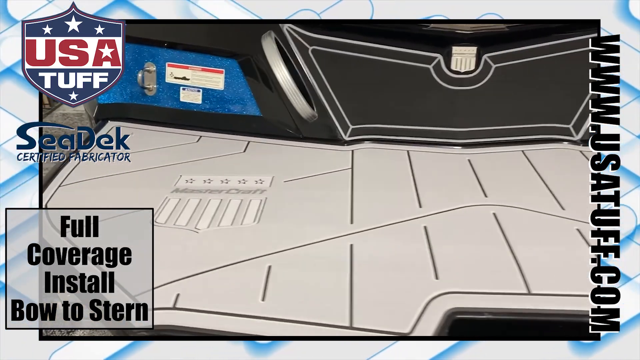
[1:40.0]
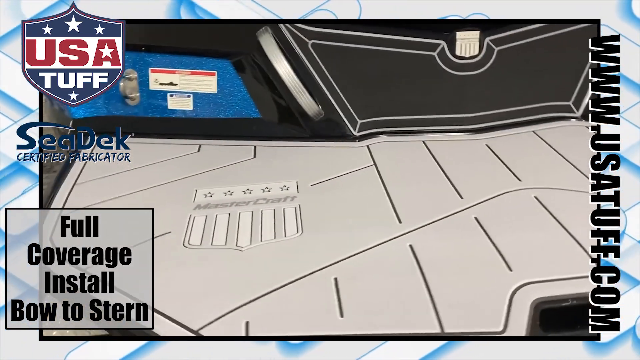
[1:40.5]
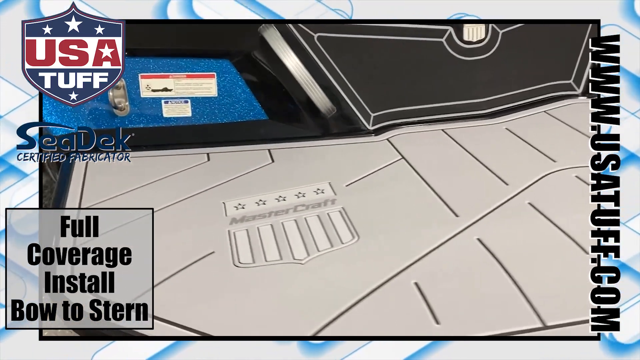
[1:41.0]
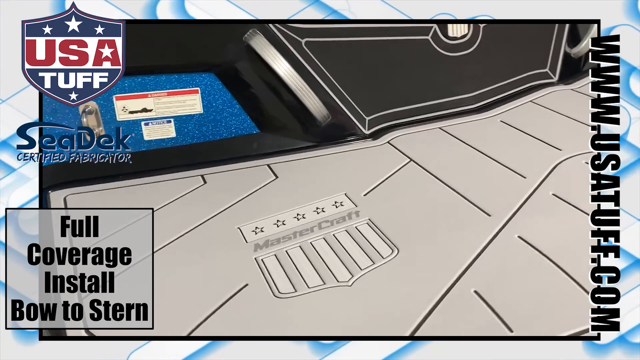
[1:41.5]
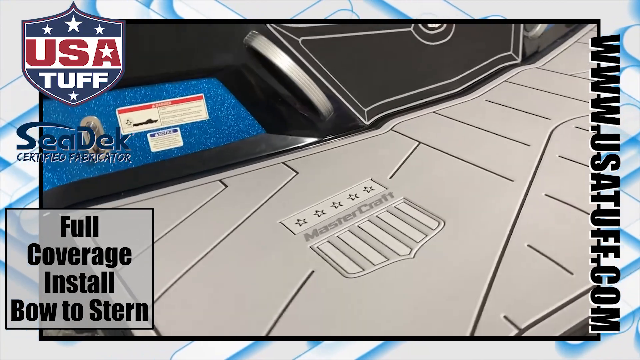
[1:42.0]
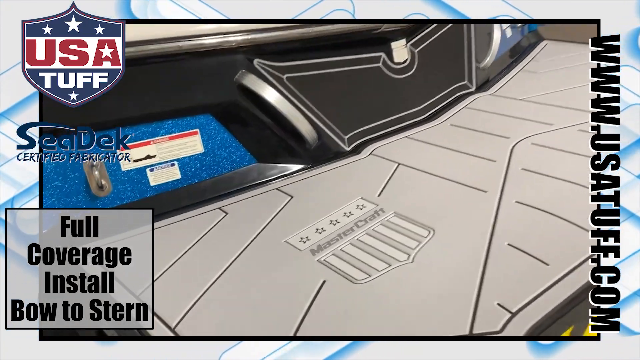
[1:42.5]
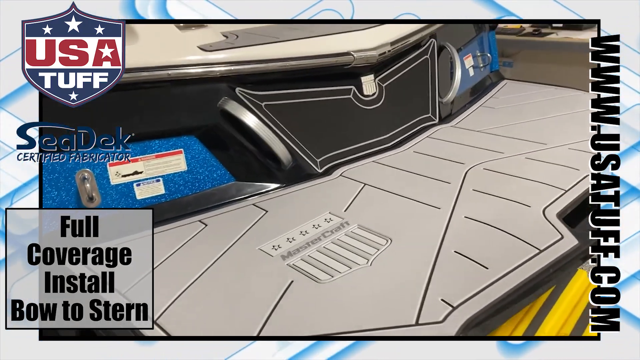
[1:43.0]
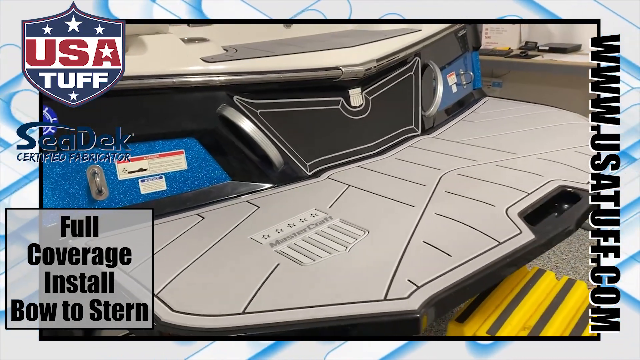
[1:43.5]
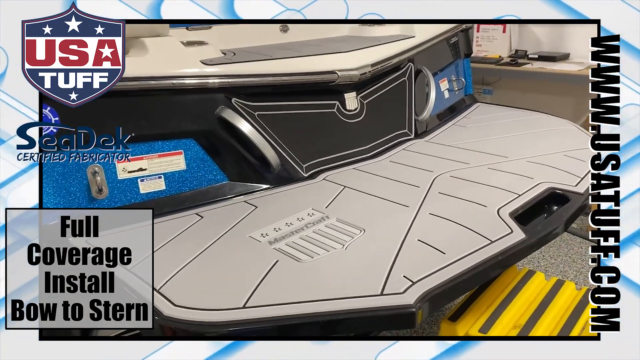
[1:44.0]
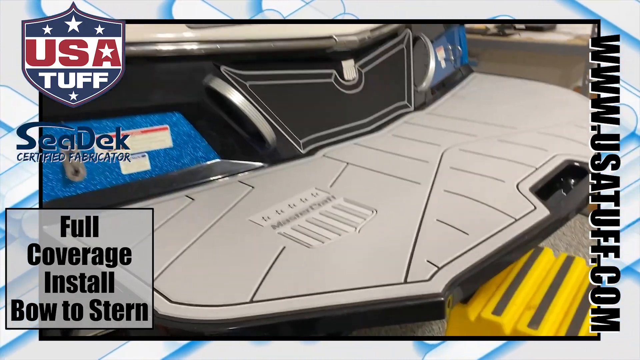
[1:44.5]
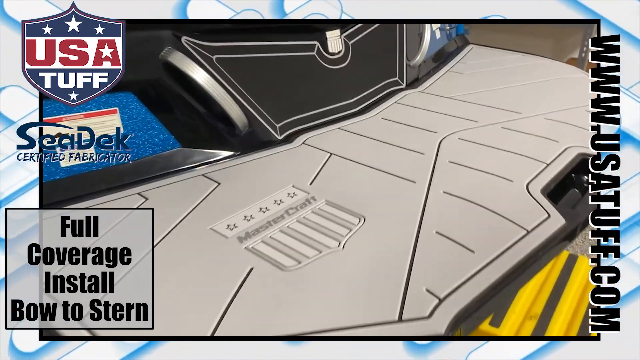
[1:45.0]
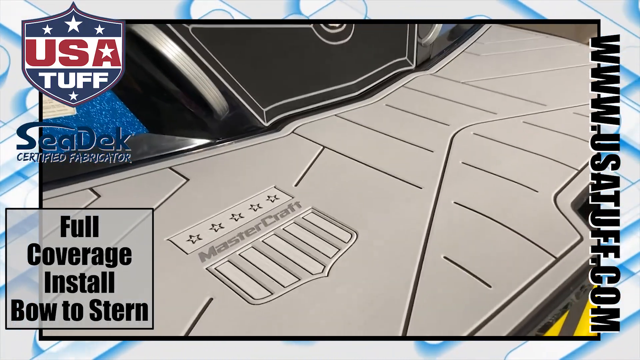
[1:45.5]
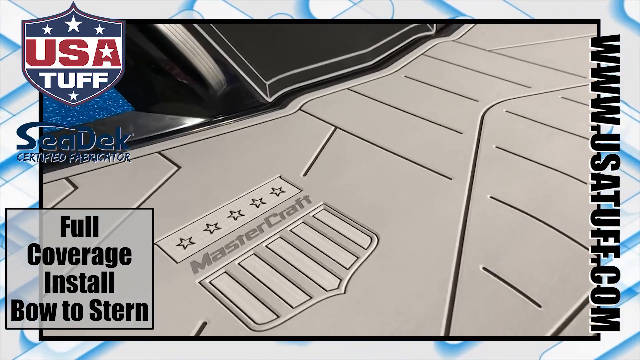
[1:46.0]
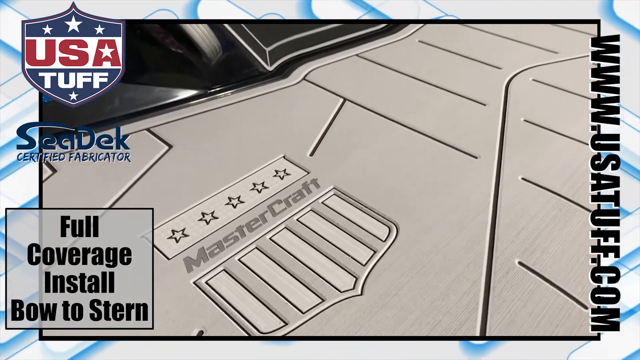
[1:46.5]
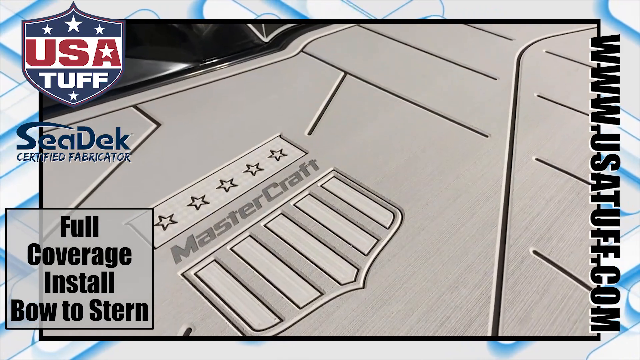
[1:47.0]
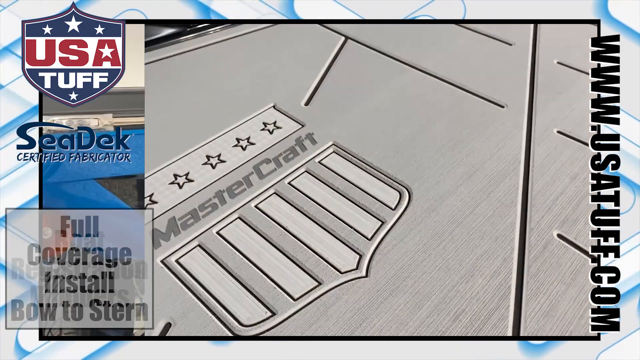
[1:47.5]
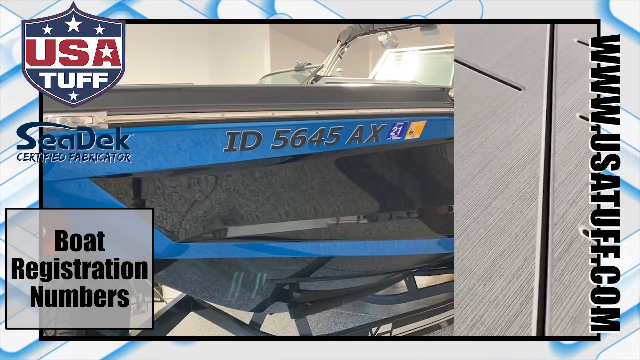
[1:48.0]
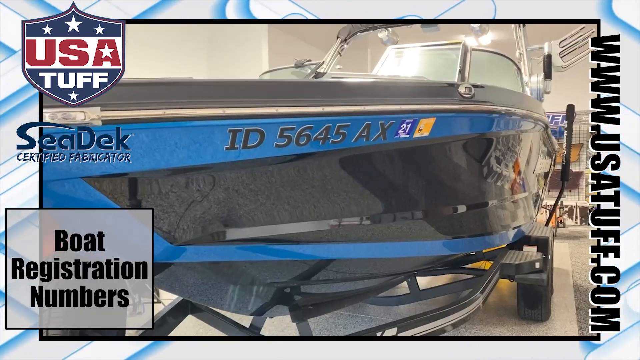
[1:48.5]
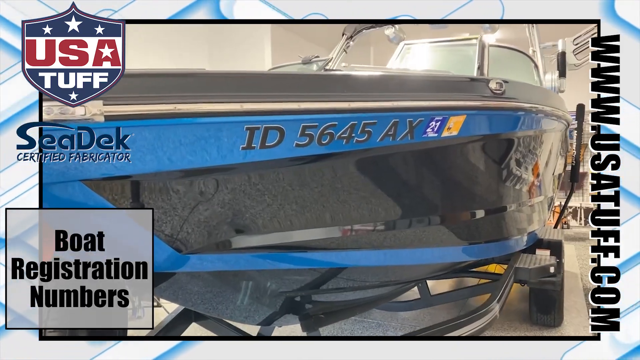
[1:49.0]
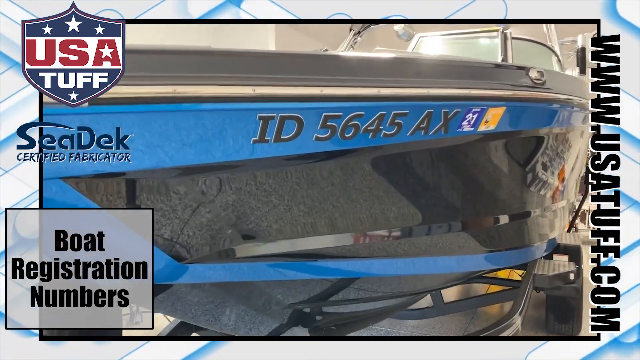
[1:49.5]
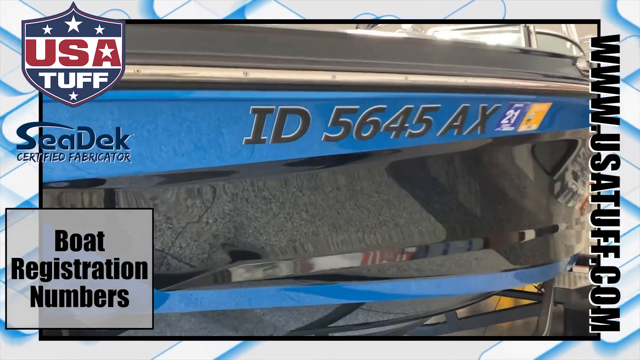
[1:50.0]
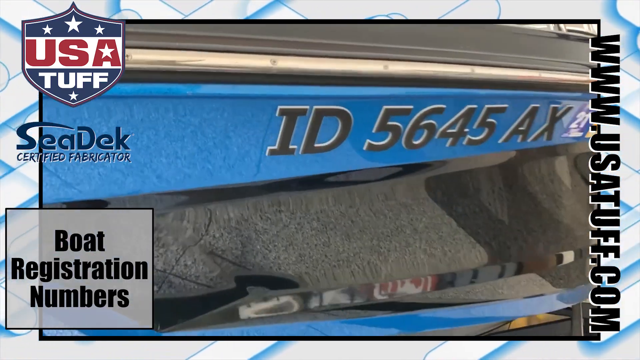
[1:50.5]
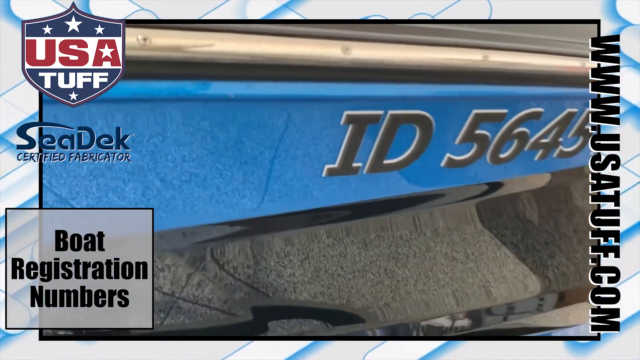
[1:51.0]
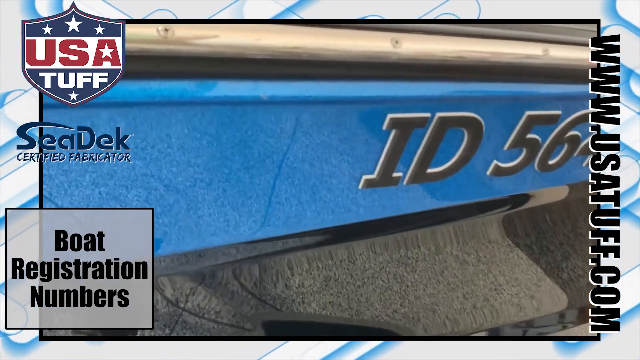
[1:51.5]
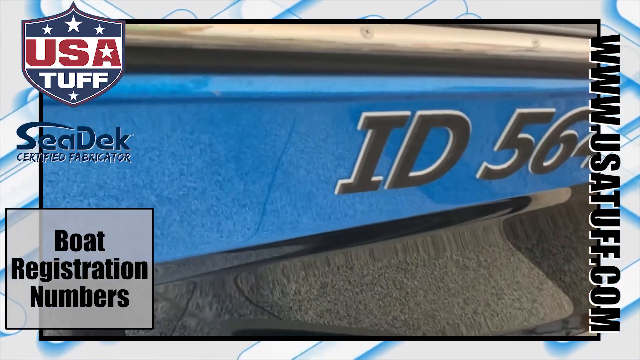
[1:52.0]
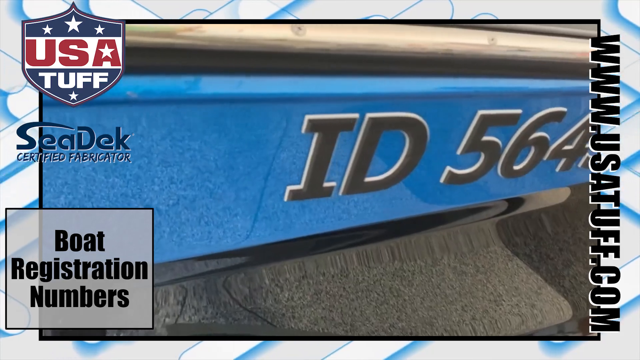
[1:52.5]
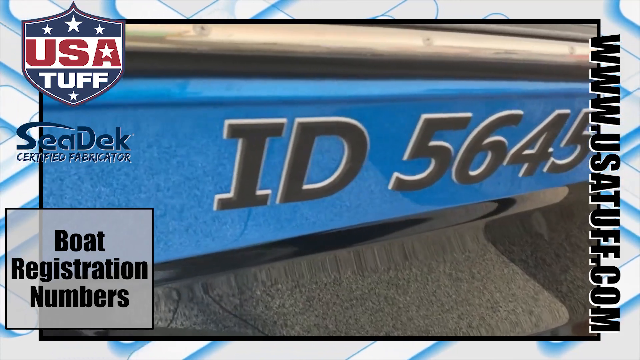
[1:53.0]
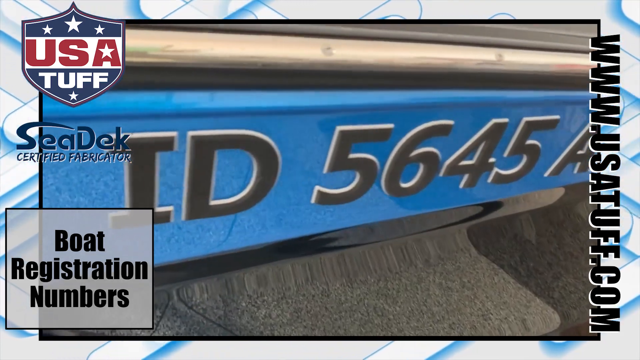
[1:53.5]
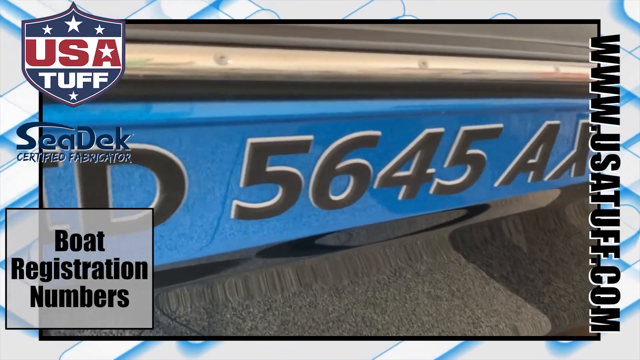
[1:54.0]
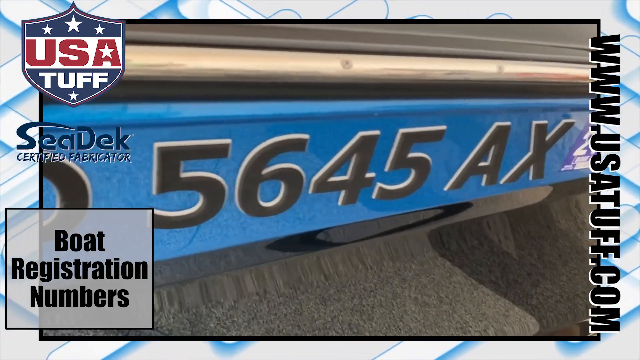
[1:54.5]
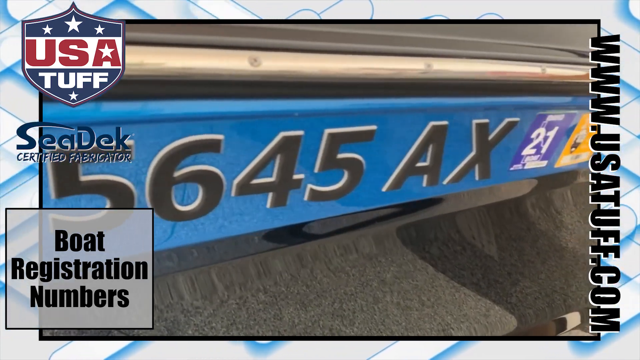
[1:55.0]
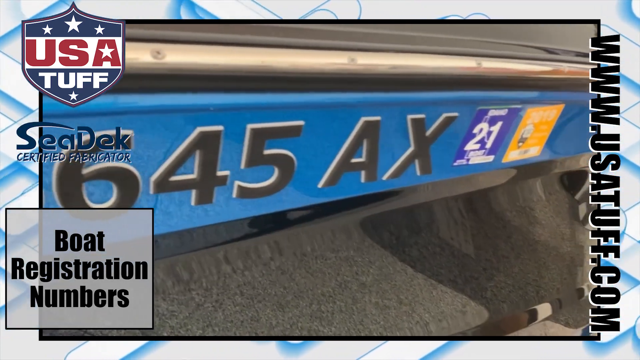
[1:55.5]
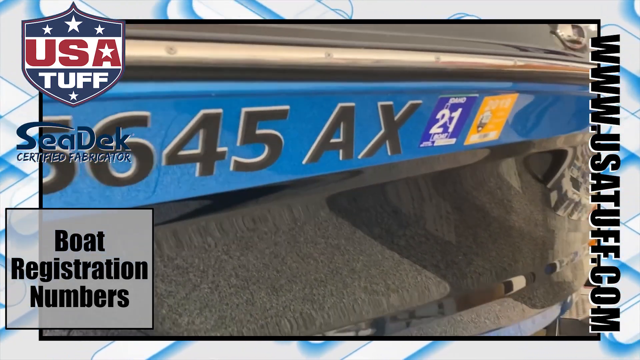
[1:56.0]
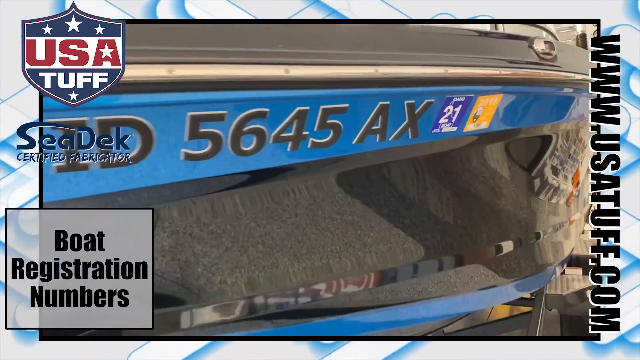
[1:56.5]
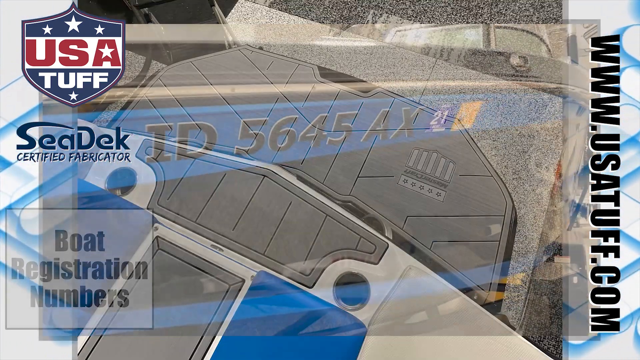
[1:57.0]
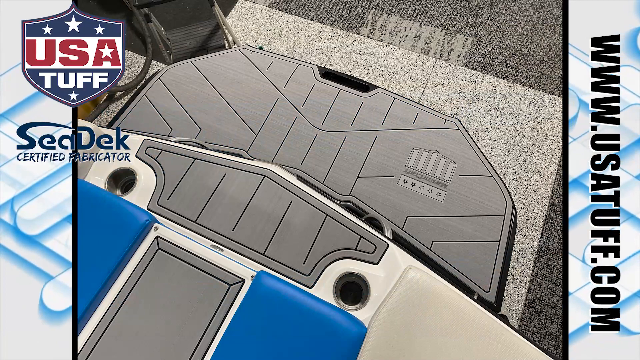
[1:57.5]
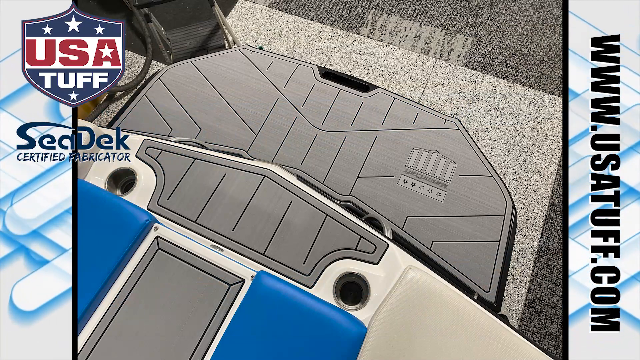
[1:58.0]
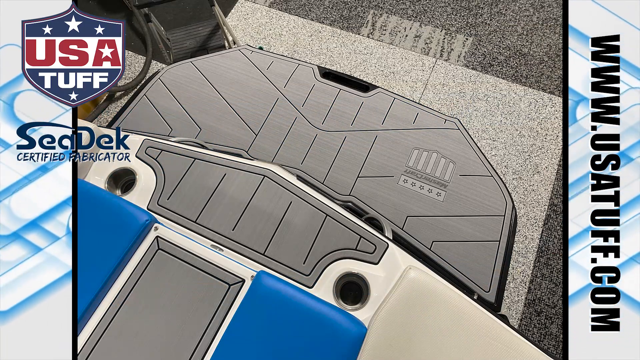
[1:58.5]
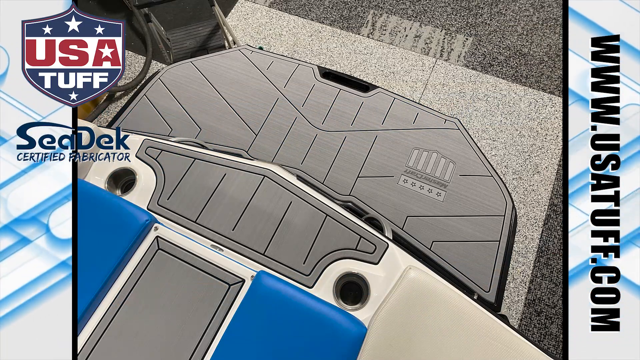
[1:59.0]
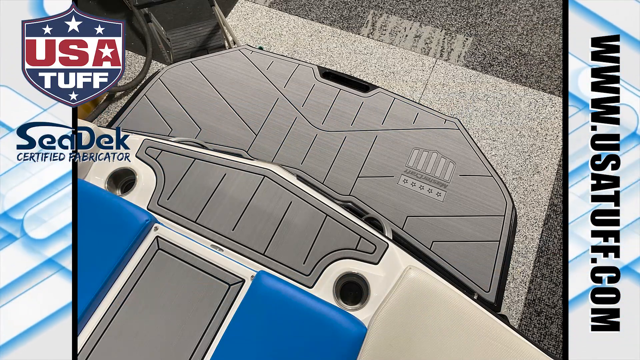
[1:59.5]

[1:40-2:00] In the lower left-hand corner is a transparent white square with a black outline, with black text reading "full", "covers", "install" and "bold to stern" on successive lines. Above it, "CDEK" appears in blue, with "certified fabricator" underneath in a smaller, different font of the same color, and above that is the emblem reading "USA TUFF". The website www.usatuff.com is on the right side. The back of the boat is shown, reading "Mastercraft", with what appear to be laser parts. A box at the bottom shows the boat's registration ID number, beginning with "ID" and ending in "X", in black outlined in white.